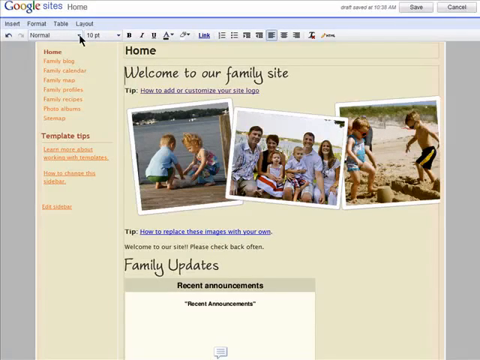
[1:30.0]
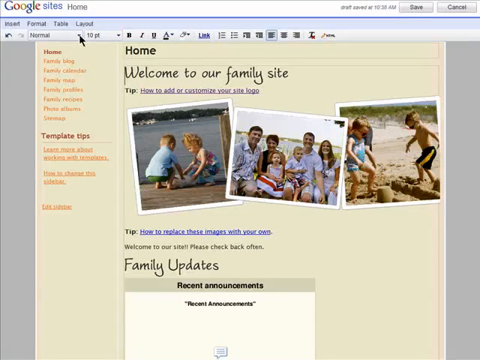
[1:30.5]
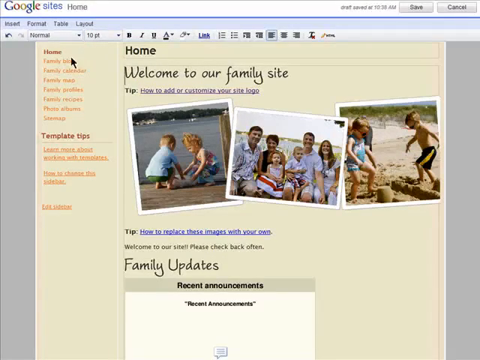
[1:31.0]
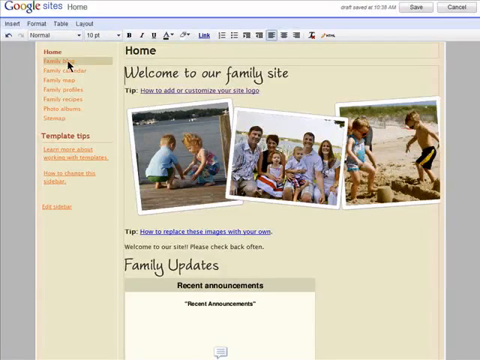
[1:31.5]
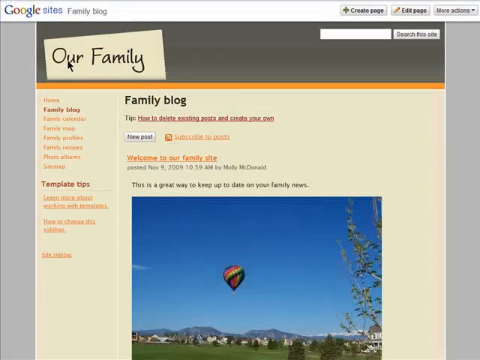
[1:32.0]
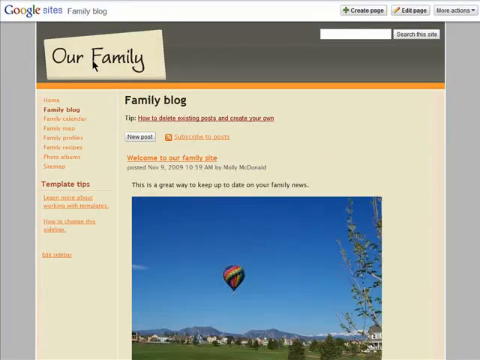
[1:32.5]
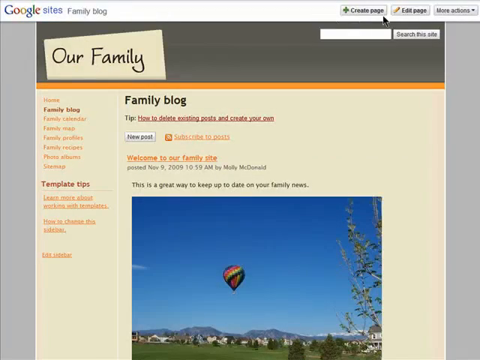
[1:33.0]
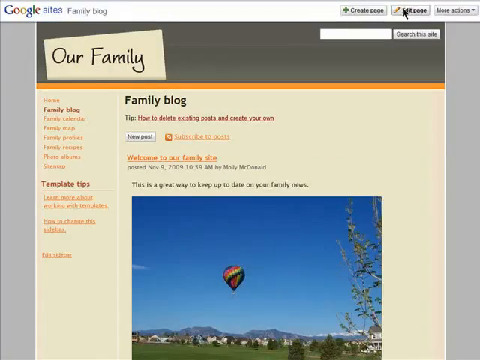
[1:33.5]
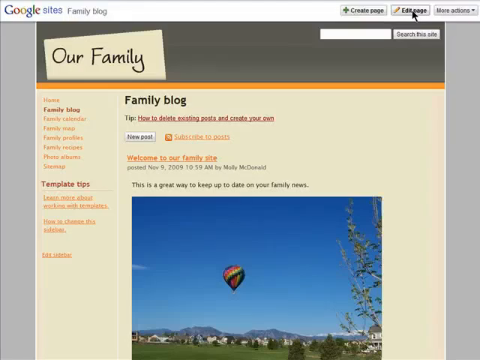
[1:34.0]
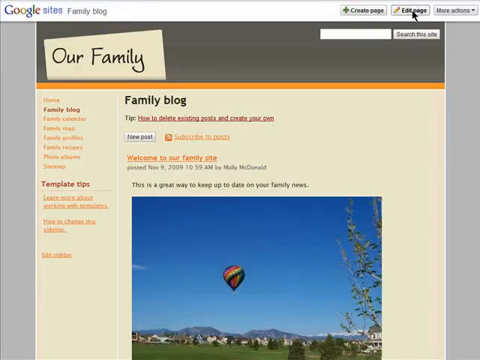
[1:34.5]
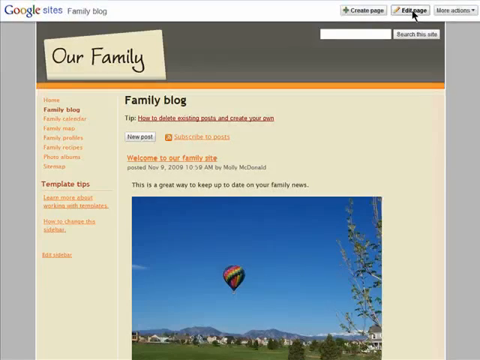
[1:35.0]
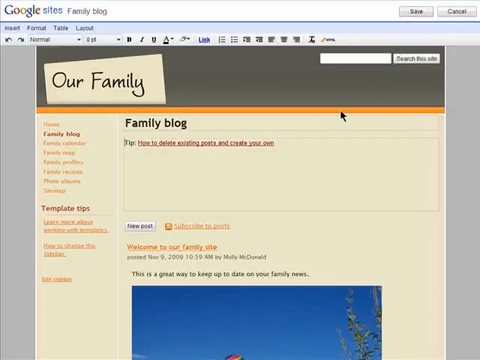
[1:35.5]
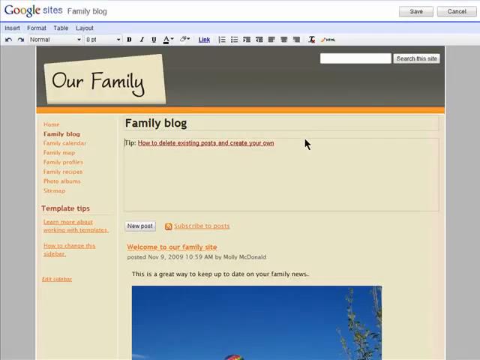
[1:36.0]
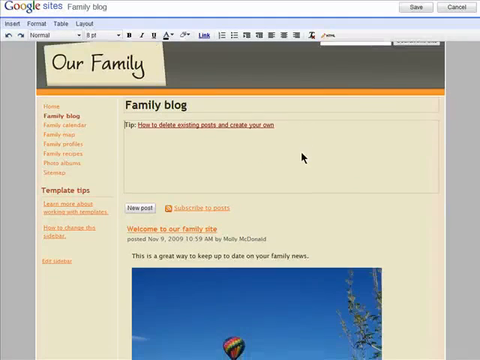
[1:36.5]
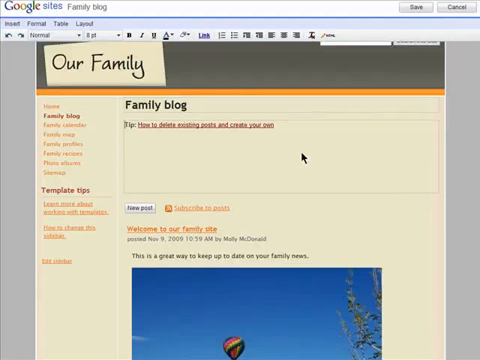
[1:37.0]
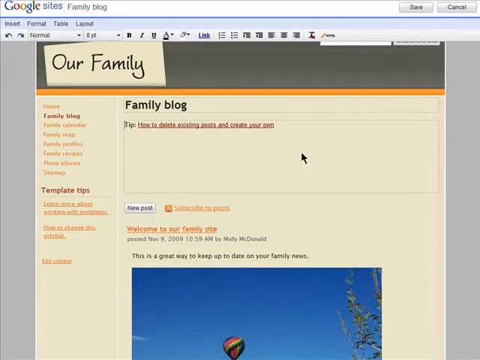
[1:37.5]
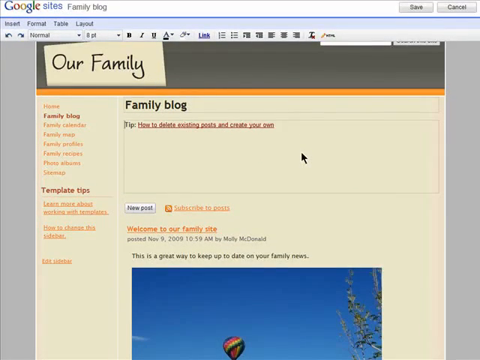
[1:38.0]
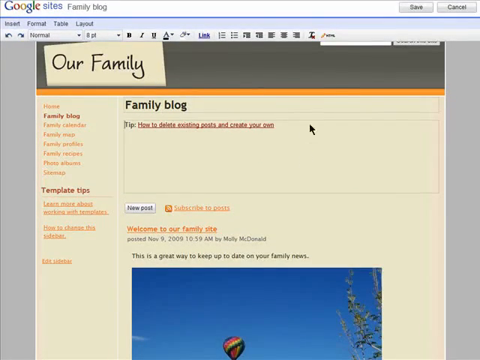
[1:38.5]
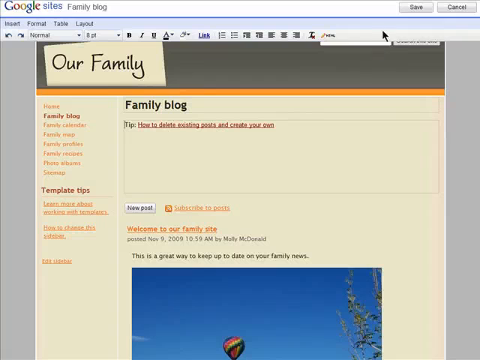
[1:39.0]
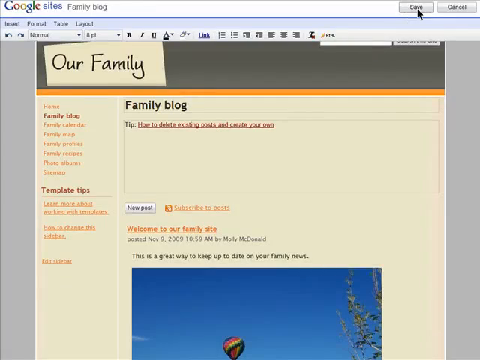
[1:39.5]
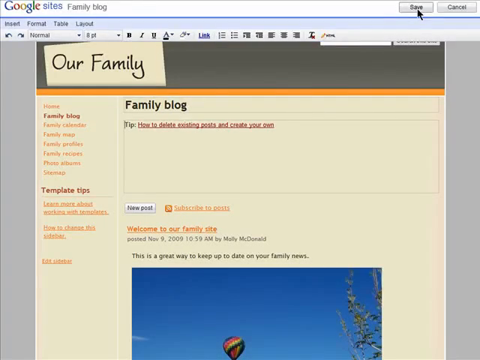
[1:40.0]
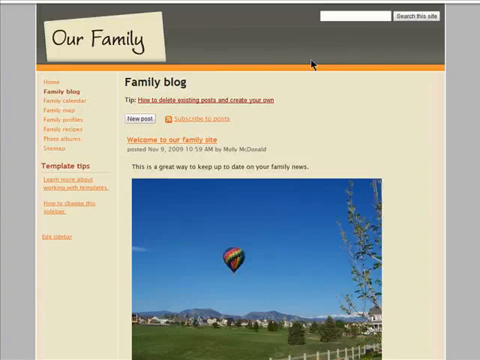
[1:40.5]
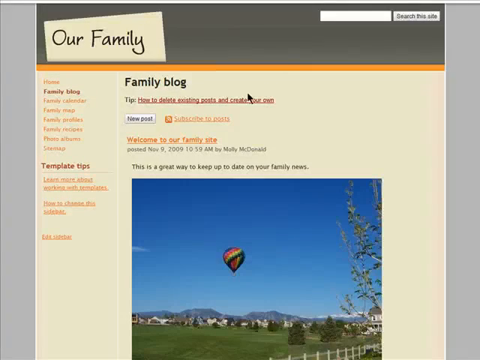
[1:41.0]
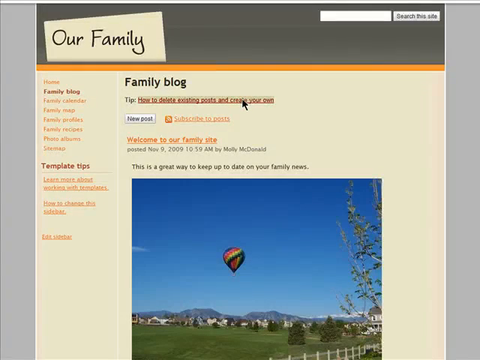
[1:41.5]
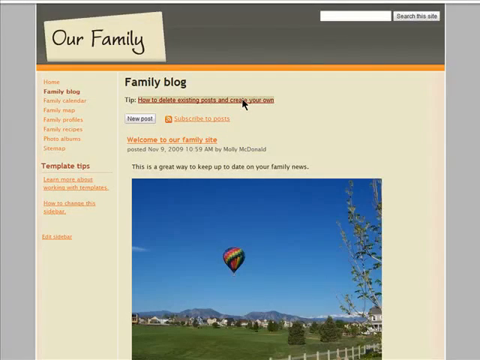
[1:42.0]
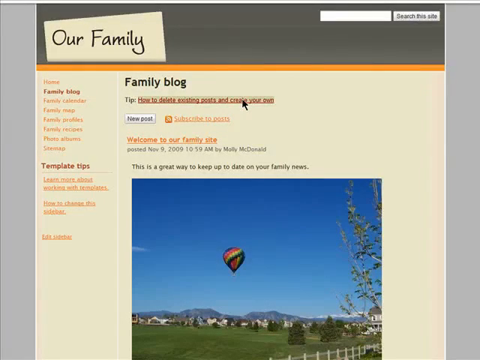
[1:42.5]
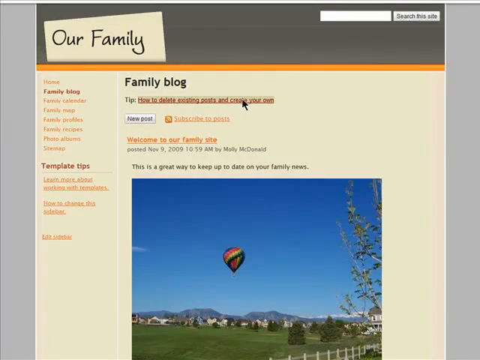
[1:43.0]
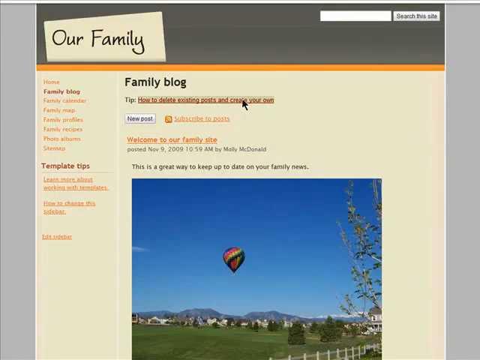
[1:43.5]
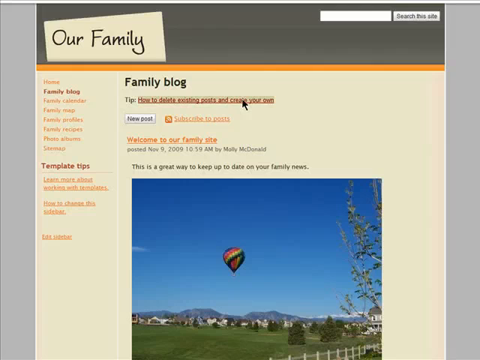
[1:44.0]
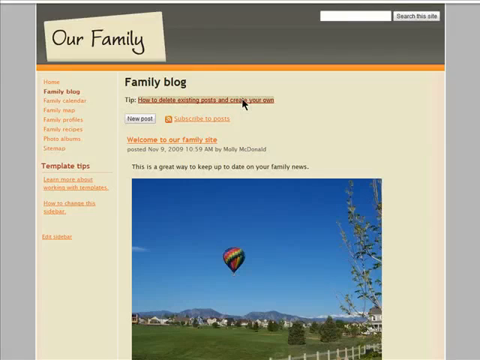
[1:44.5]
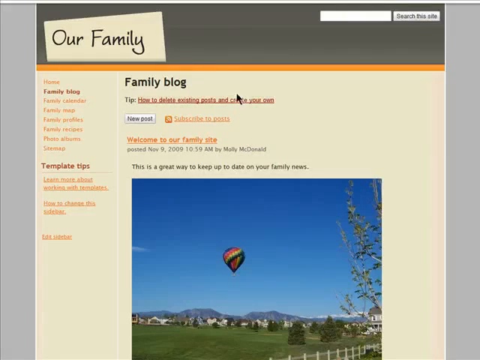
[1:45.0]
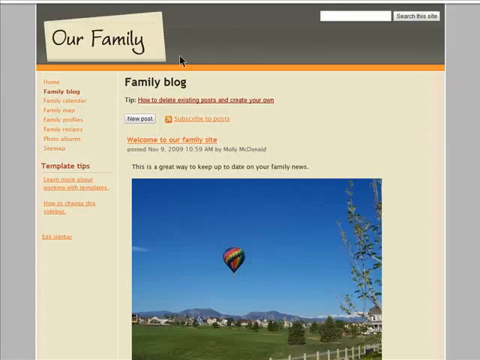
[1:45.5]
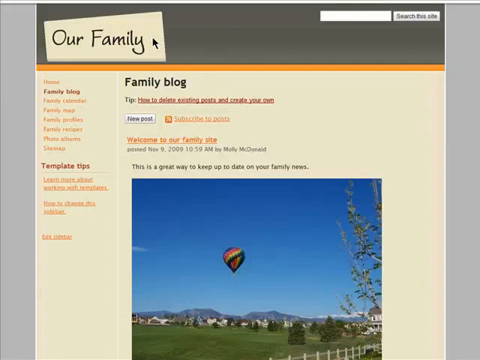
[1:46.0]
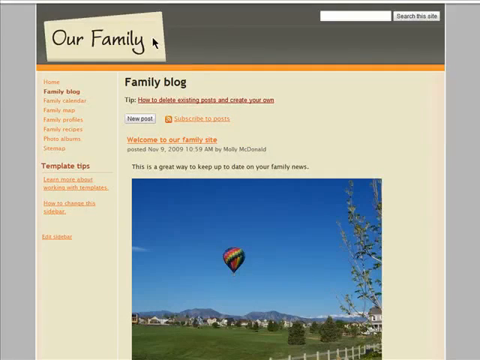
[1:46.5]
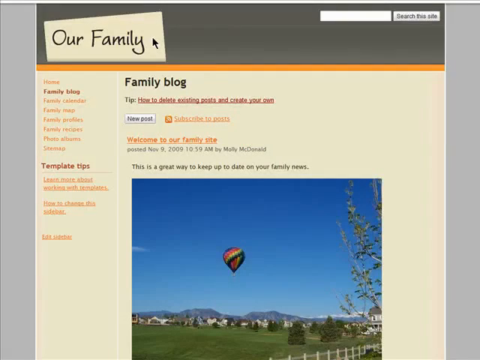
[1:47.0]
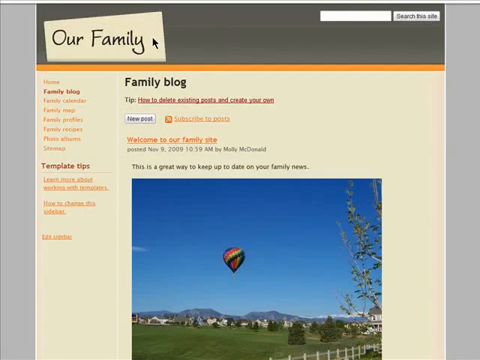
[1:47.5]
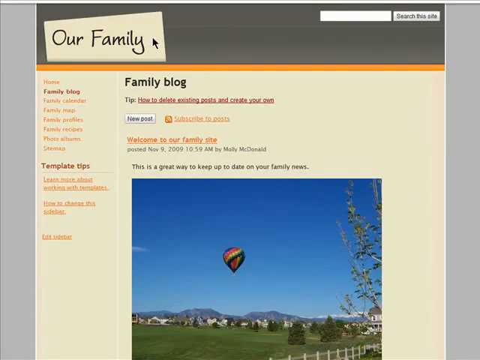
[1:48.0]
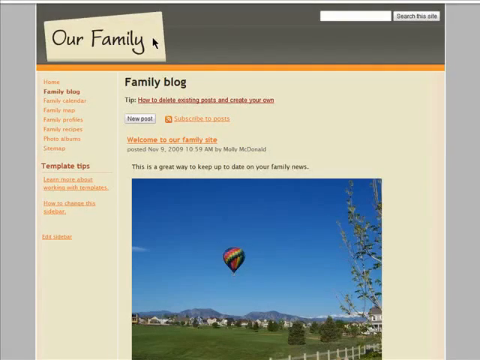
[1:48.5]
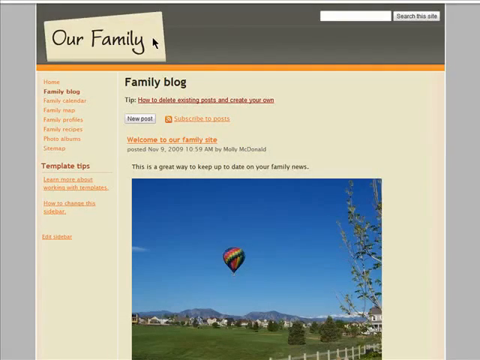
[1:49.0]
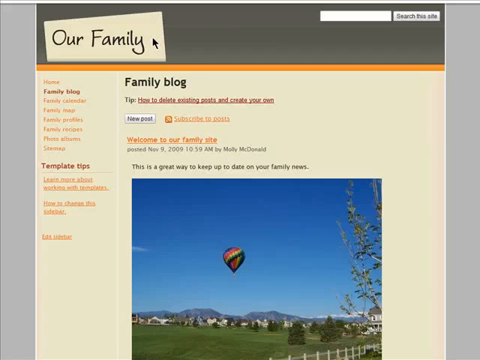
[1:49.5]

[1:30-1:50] The home page of the family's website is shown under "Google Sites, Home," apparently the back end of the site. "Save" and "Cancel" appear at the top, and beneath them "Insert," "Format," "Table" and "Layout." Below that, the arrow is on the font area, then moves down to a selection within the body of the webpage. A click brings up an "Edit Page" option; clicking it opens a small sub-window at the top with commands for font and alignment. The user clicks Save and then moves up to the family site, hovering over the top logo reading "Our Family." There is also what seems to be a picture graphic on the family's blog page, showing a blue sky and a multicolored hot air balloon.